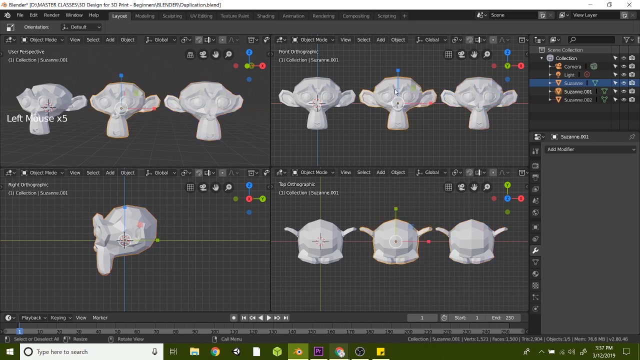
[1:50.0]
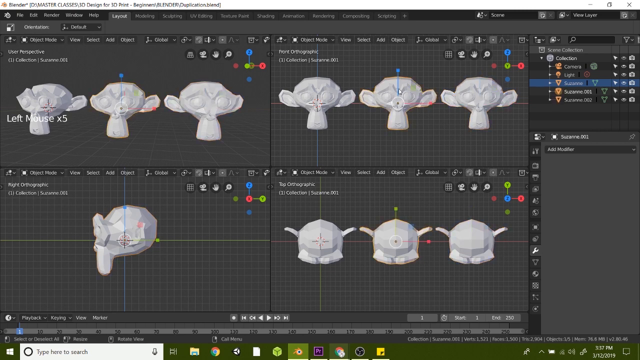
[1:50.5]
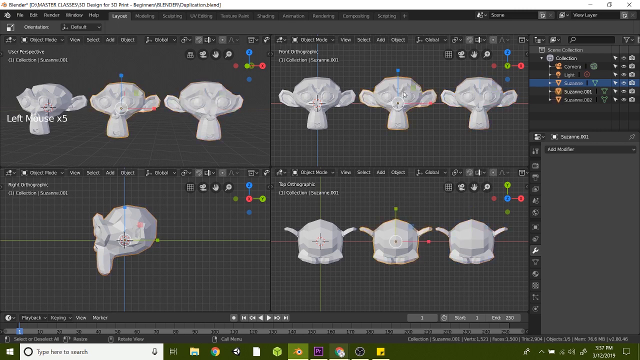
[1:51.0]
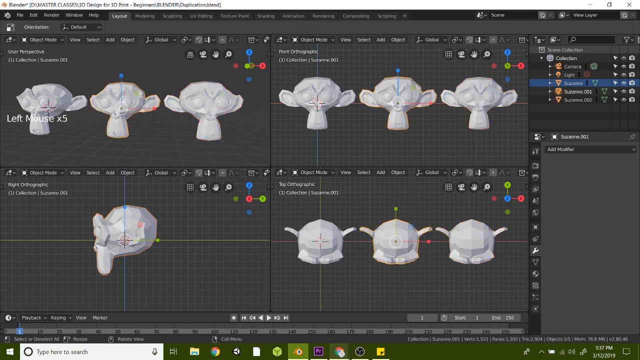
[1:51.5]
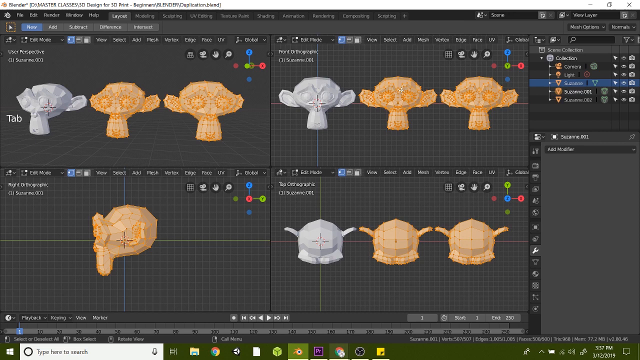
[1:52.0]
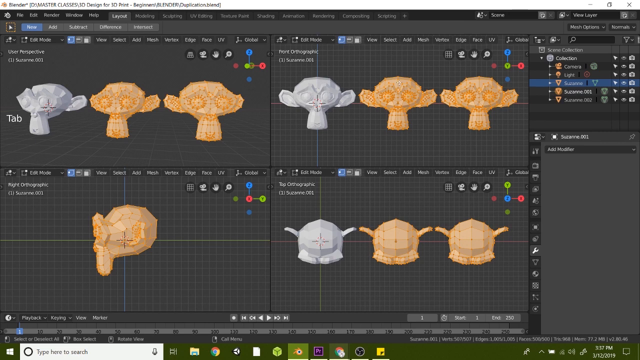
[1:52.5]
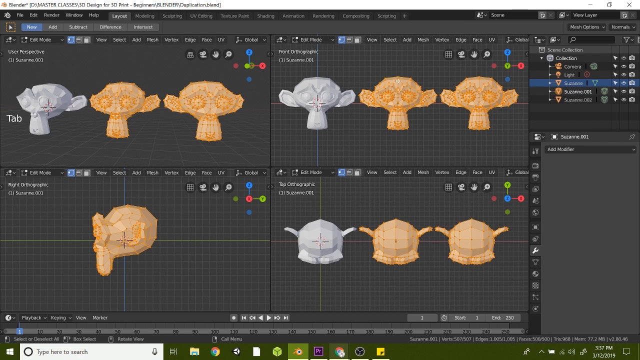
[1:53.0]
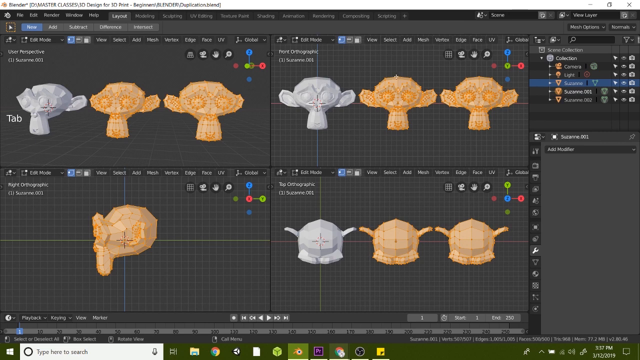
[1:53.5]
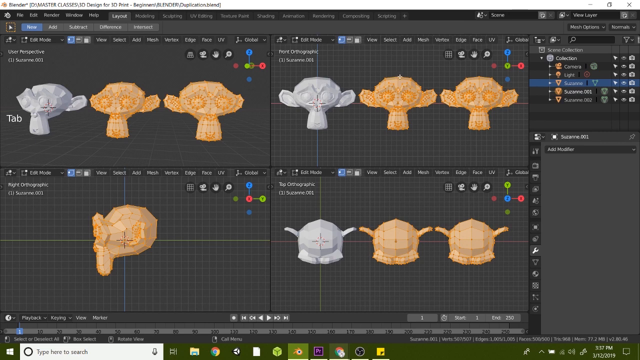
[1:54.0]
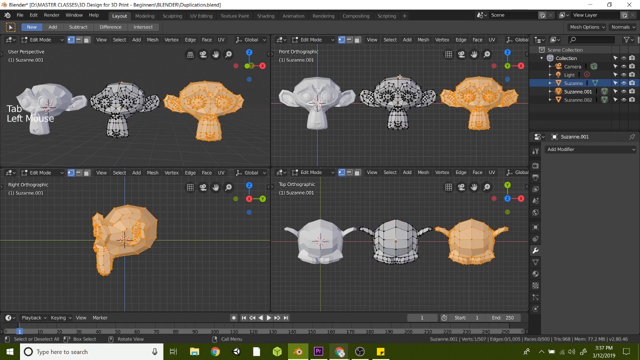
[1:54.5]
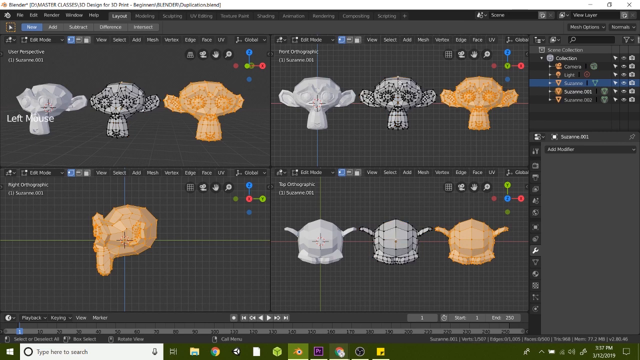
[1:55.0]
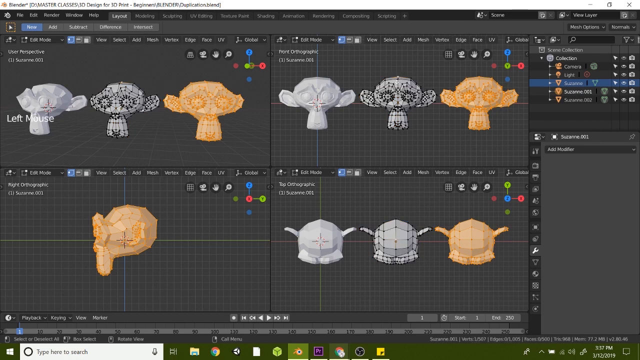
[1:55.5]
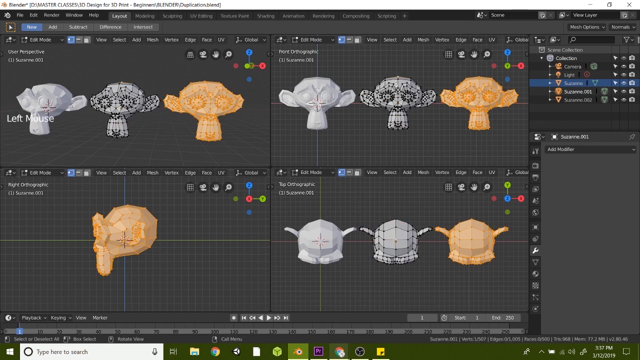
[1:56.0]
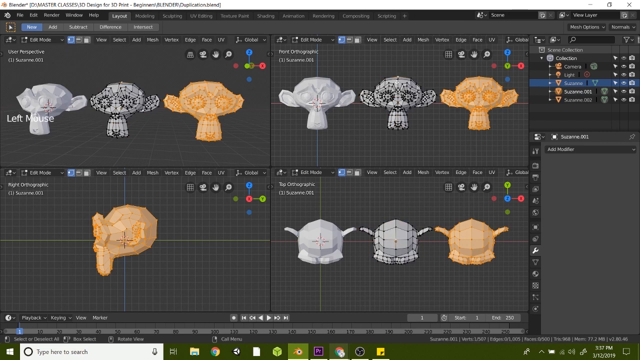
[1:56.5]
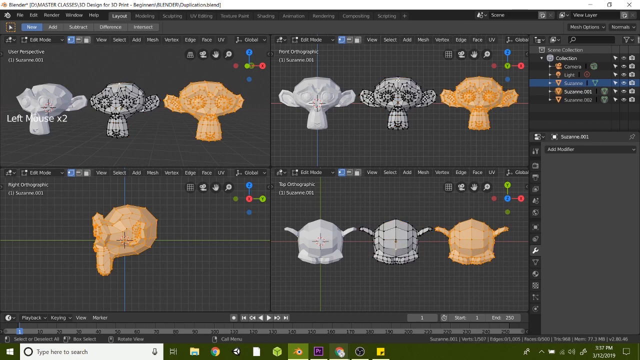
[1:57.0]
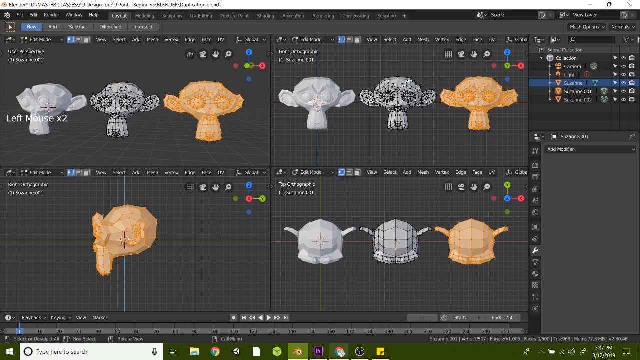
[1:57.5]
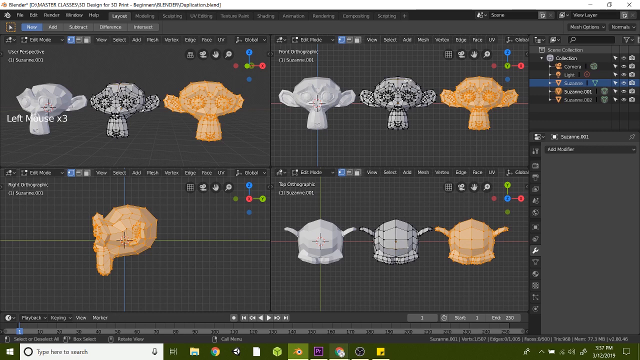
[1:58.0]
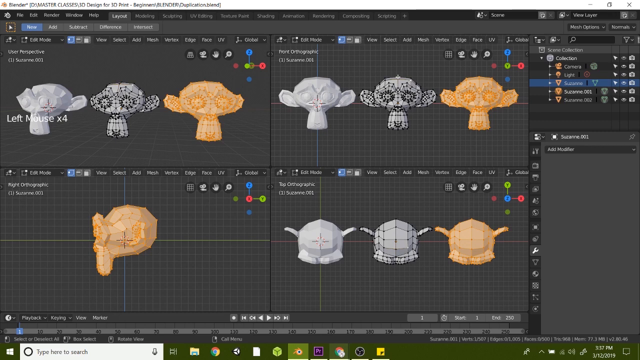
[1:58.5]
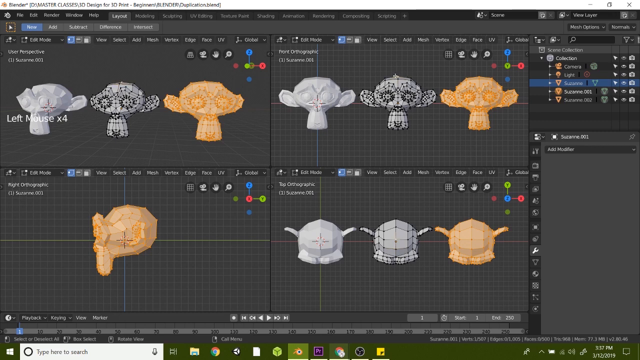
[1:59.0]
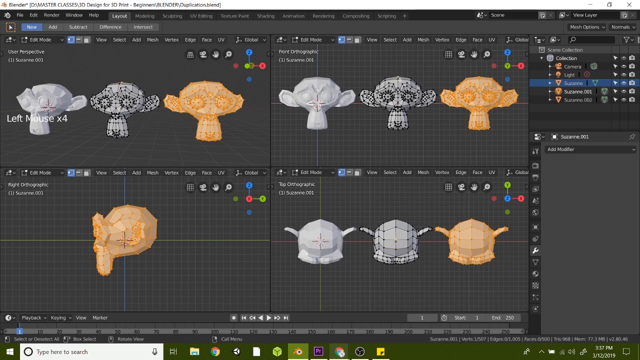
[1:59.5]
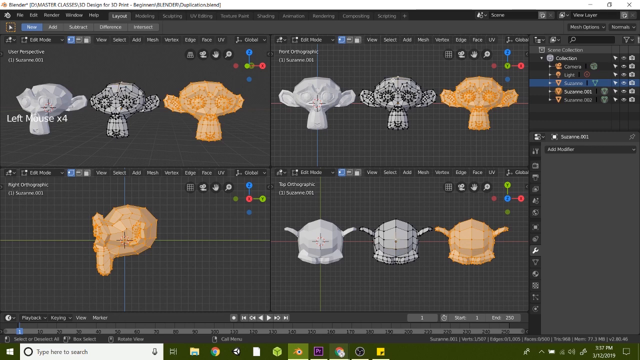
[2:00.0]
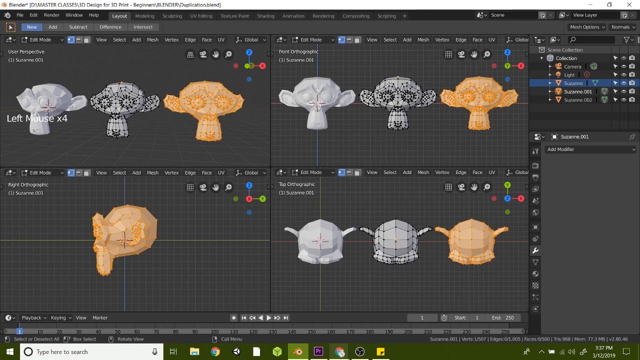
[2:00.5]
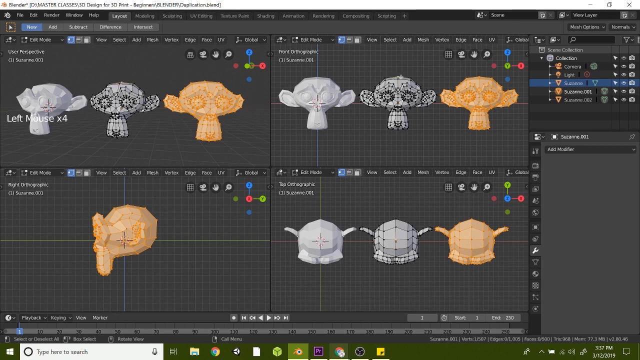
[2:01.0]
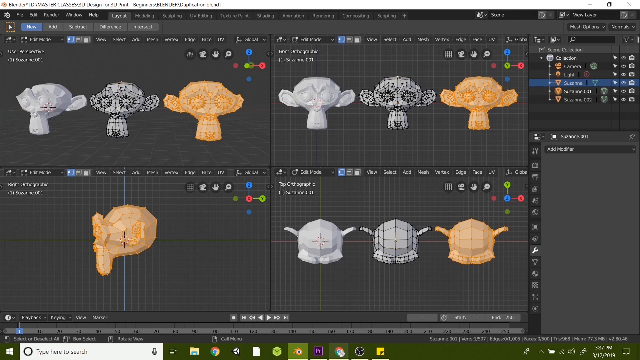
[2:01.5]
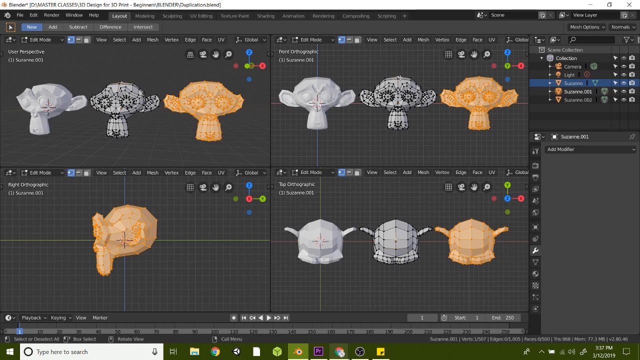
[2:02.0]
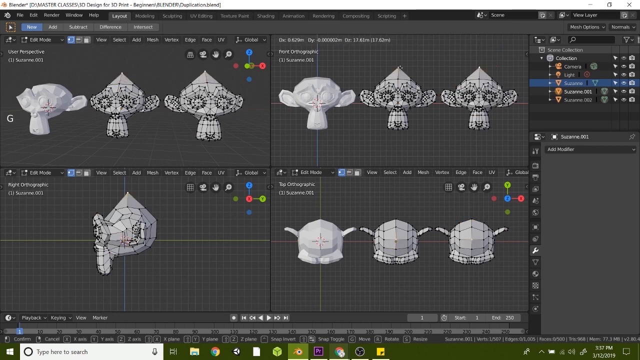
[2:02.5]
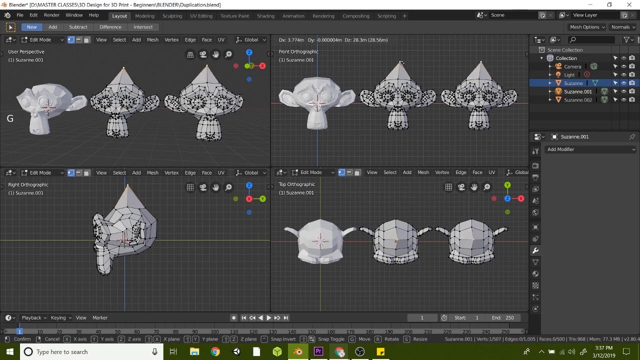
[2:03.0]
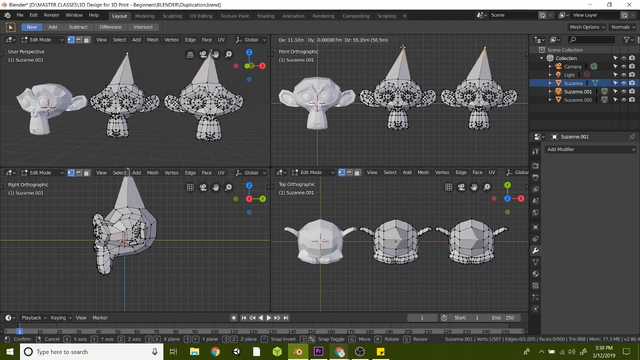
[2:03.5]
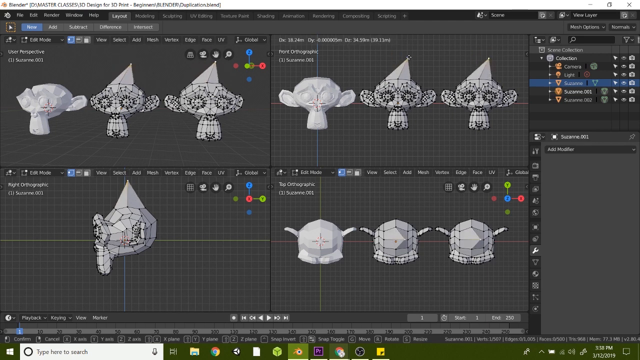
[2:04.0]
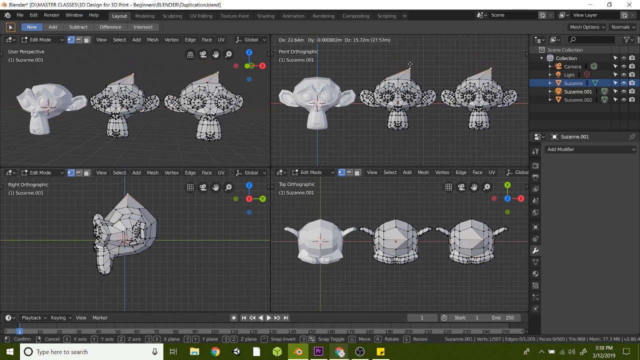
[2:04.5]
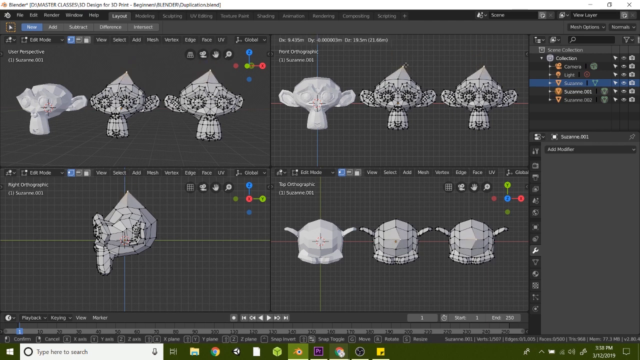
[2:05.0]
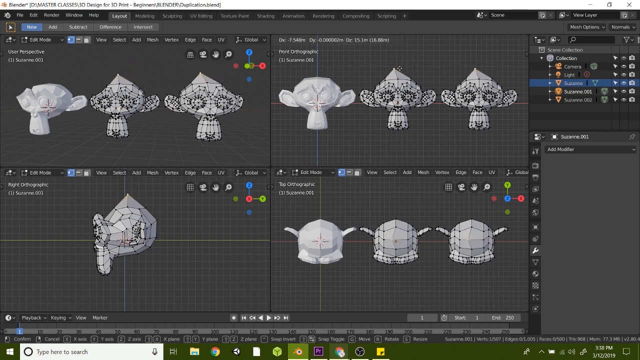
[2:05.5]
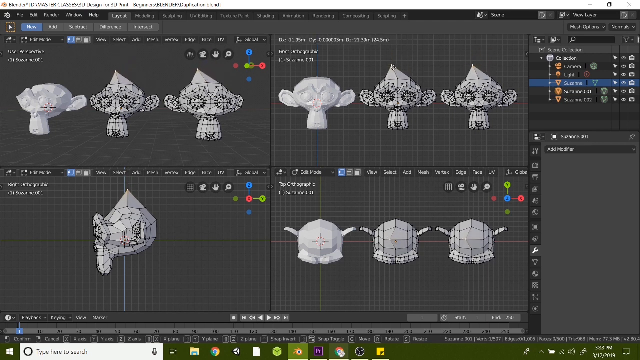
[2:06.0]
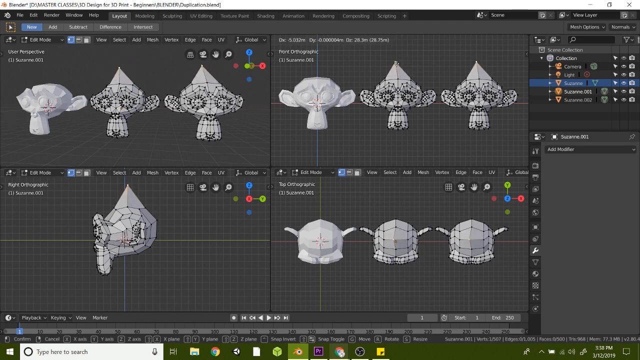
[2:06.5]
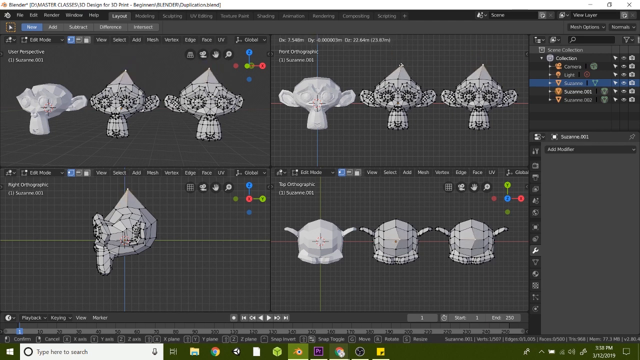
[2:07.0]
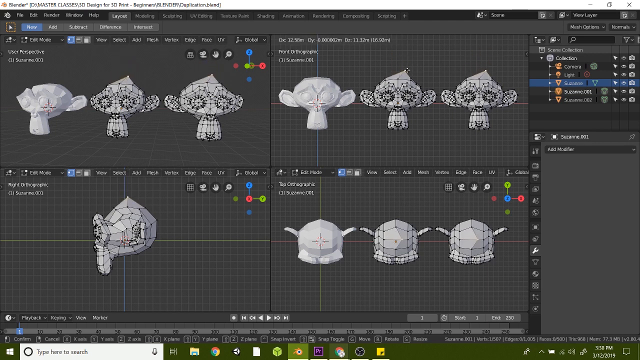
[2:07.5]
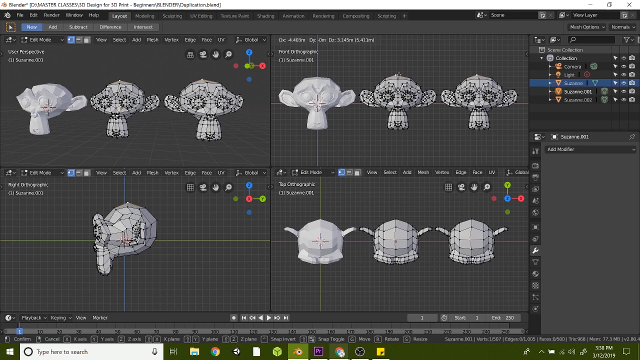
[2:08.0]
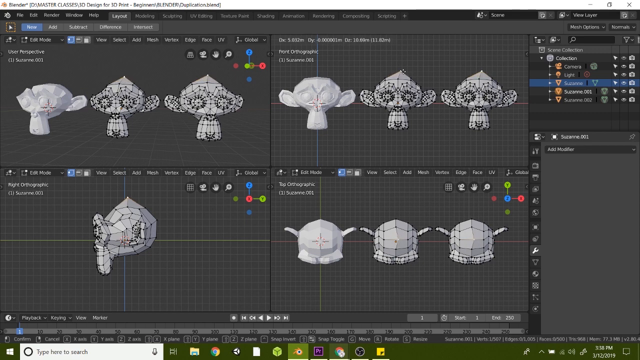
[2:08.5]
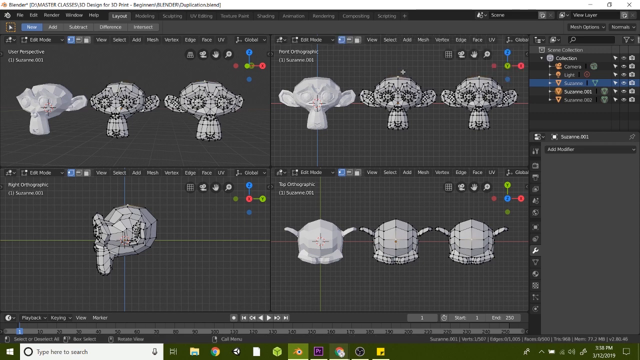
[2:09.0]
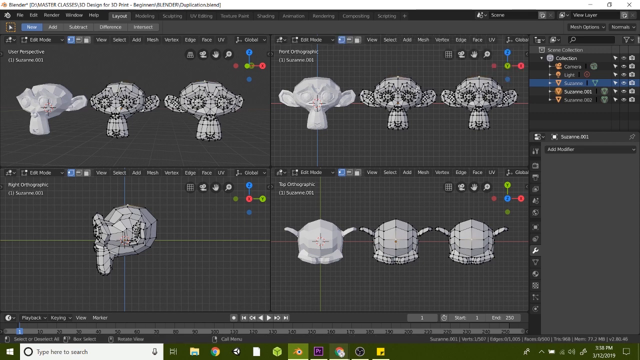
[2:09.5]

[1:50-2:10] Apparently the man highlights something inside Blender while the screen is recorded.